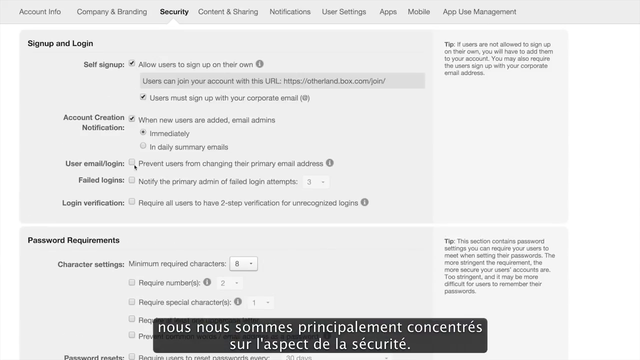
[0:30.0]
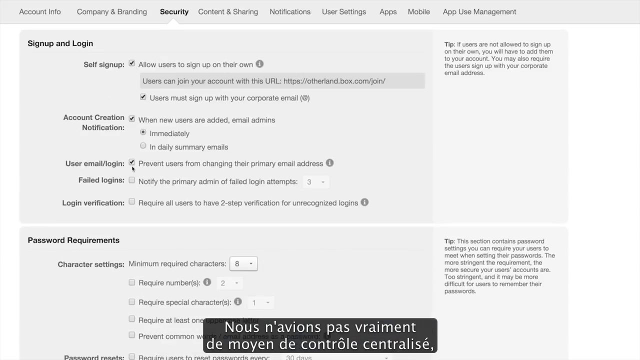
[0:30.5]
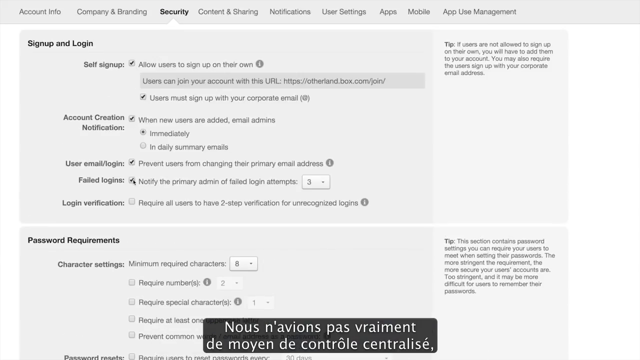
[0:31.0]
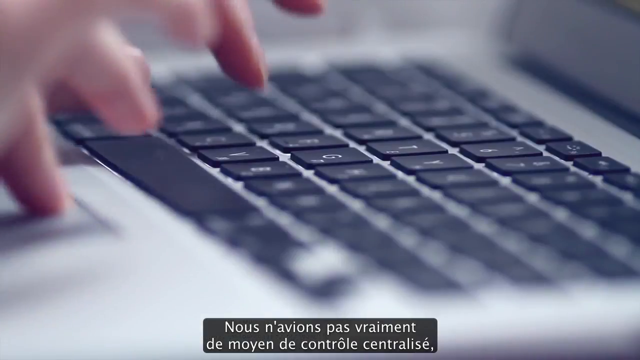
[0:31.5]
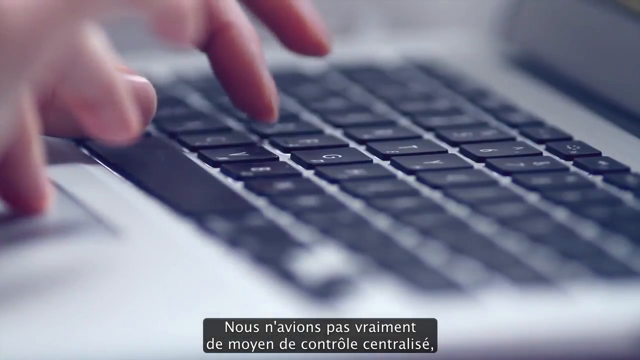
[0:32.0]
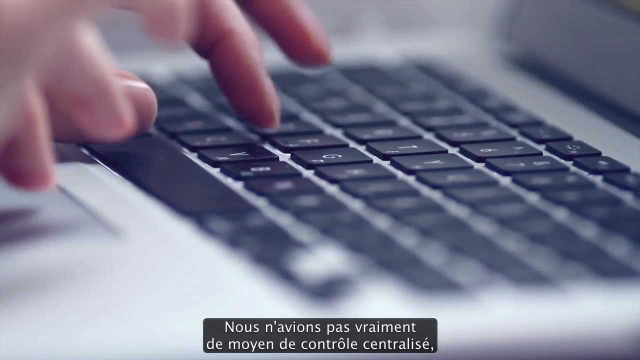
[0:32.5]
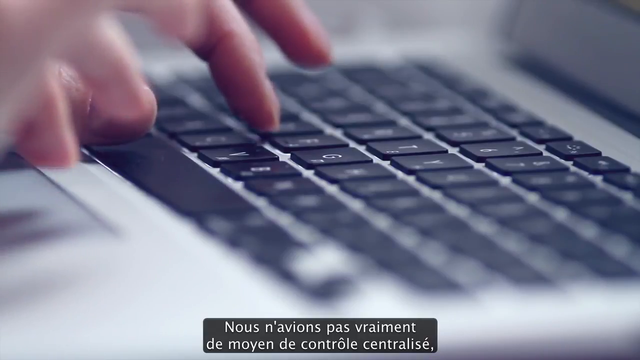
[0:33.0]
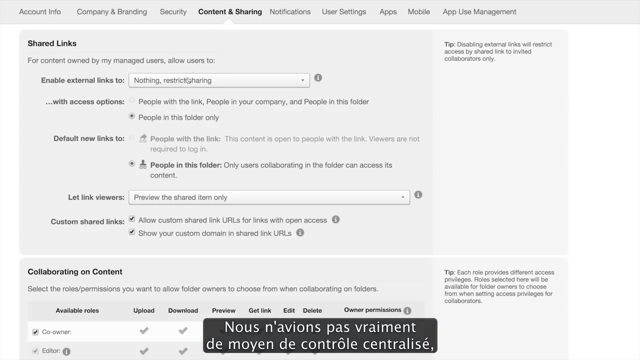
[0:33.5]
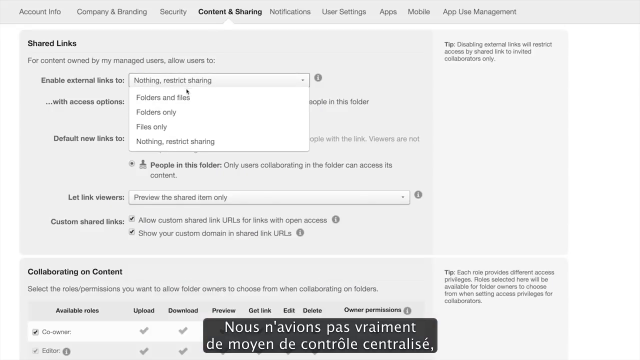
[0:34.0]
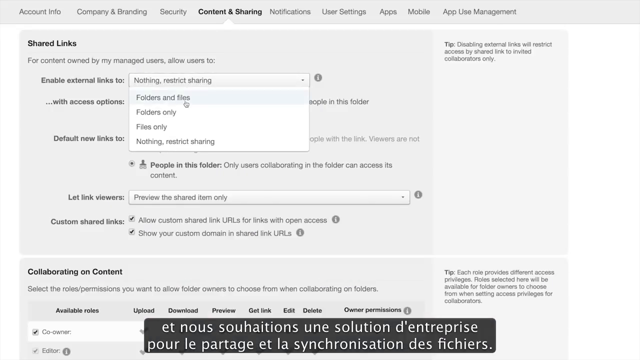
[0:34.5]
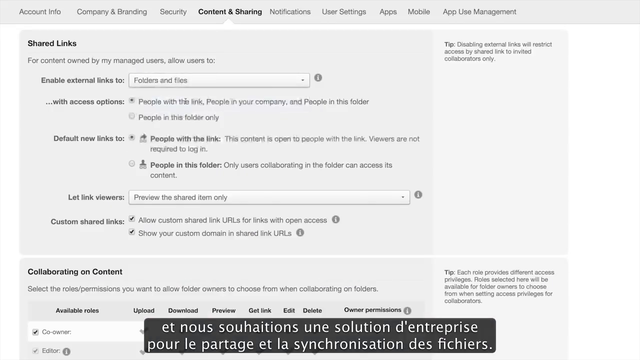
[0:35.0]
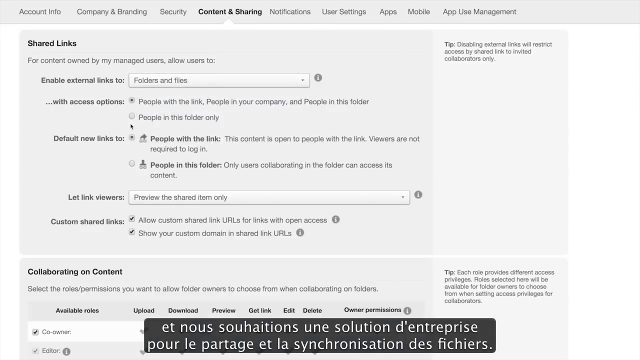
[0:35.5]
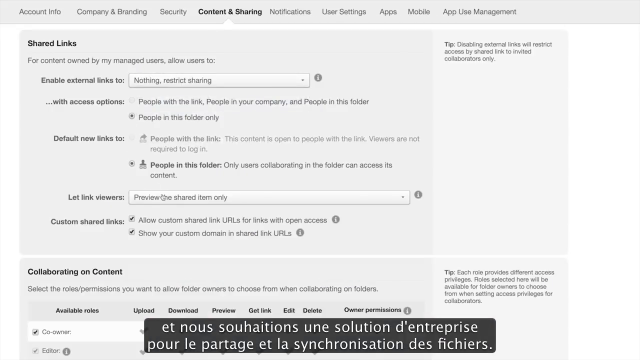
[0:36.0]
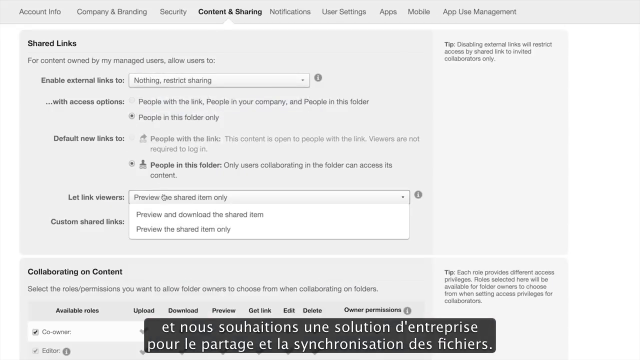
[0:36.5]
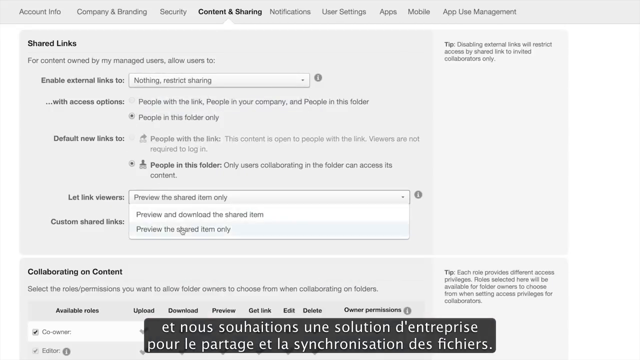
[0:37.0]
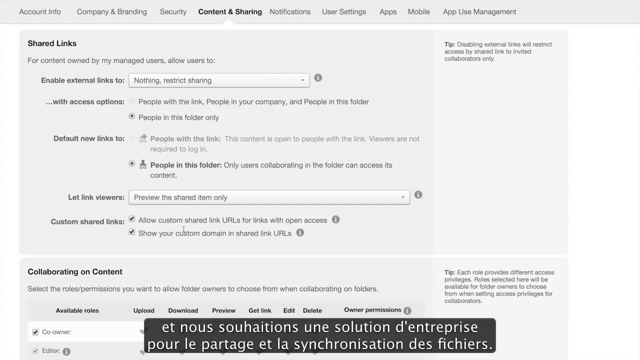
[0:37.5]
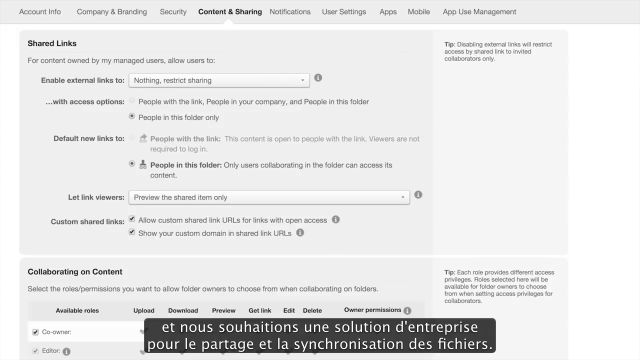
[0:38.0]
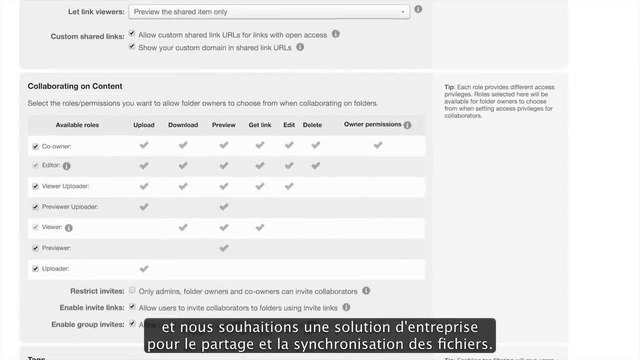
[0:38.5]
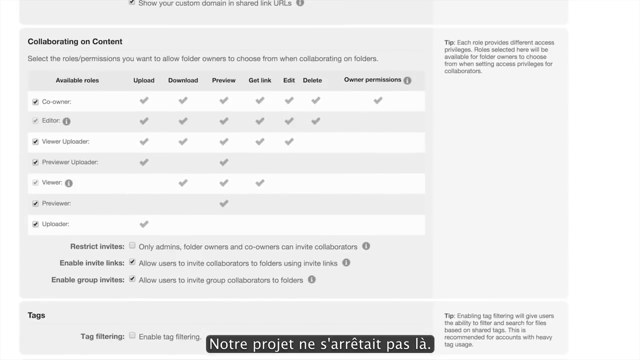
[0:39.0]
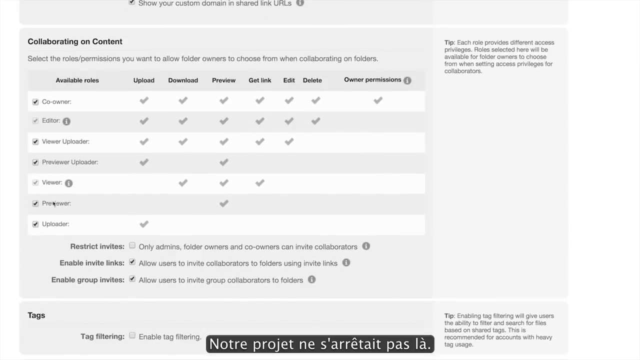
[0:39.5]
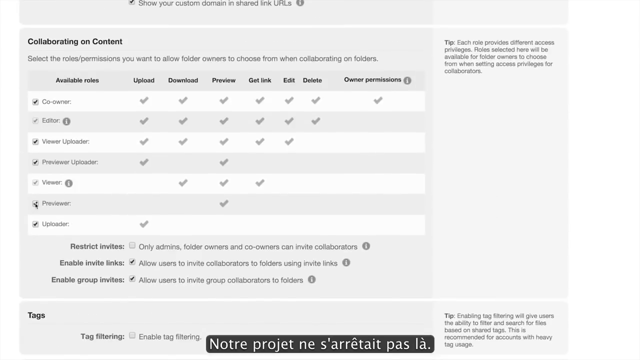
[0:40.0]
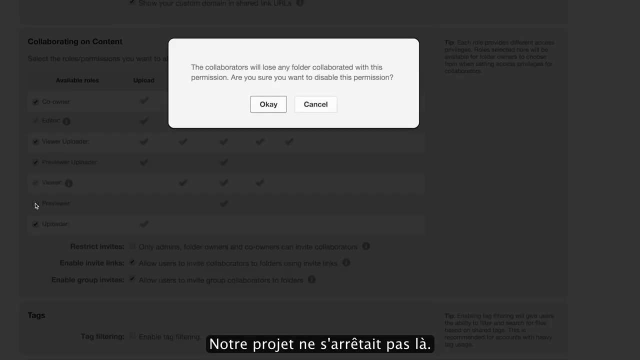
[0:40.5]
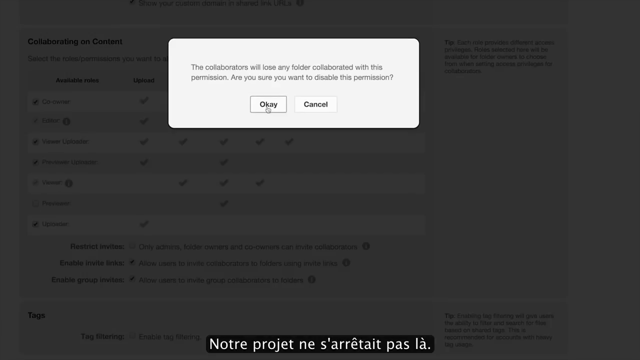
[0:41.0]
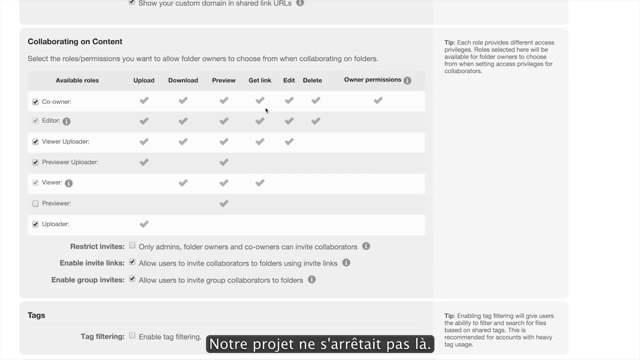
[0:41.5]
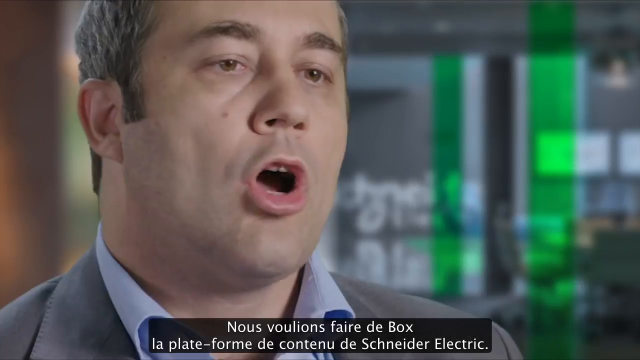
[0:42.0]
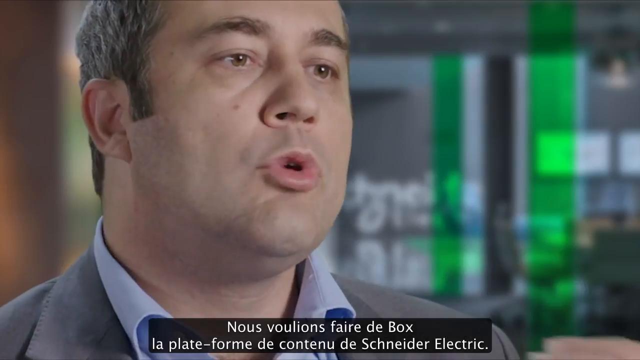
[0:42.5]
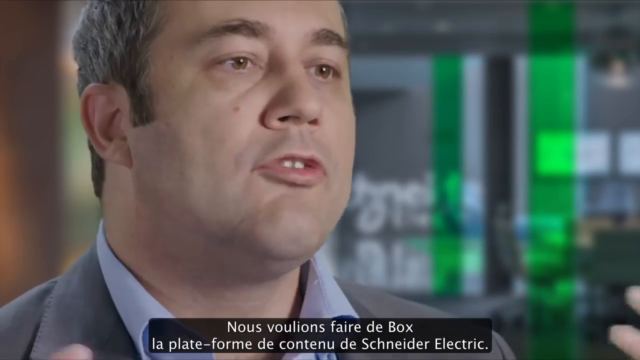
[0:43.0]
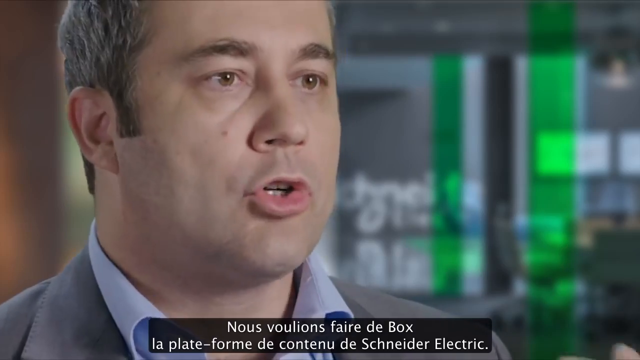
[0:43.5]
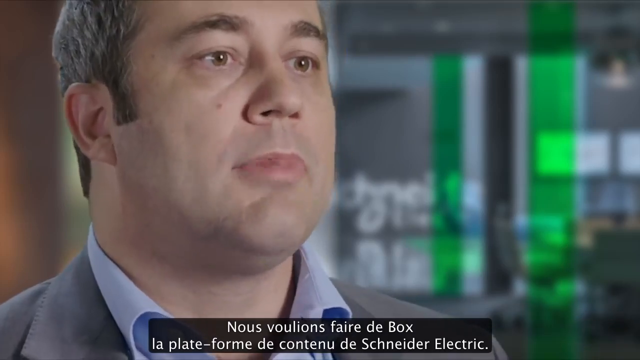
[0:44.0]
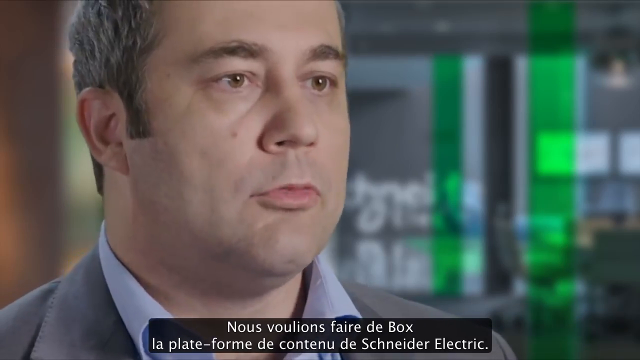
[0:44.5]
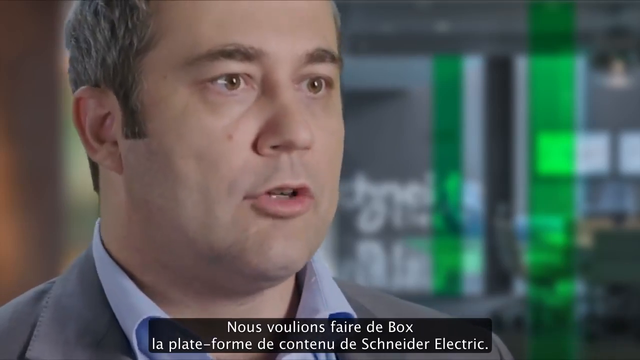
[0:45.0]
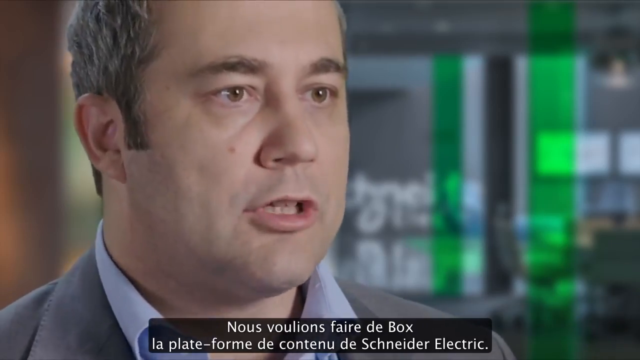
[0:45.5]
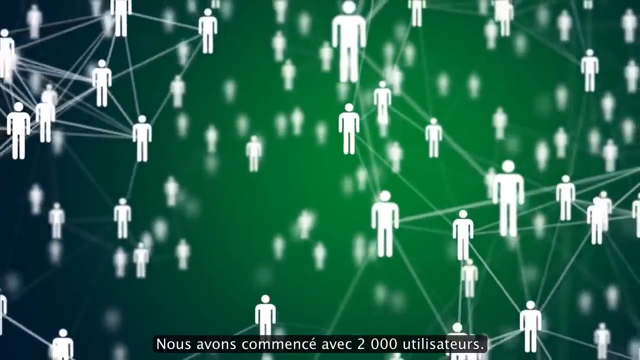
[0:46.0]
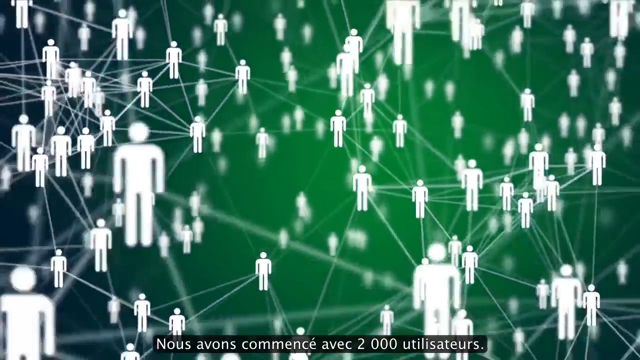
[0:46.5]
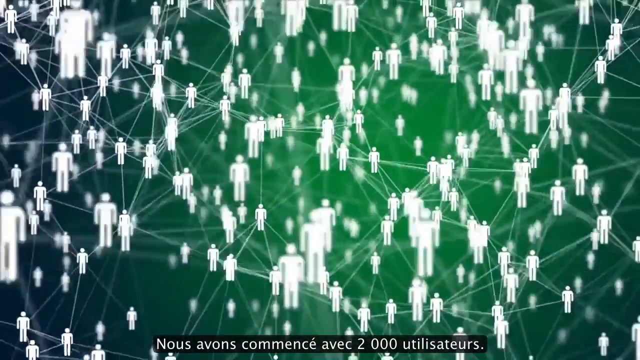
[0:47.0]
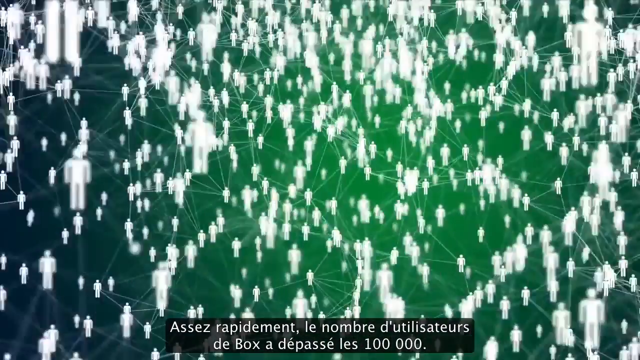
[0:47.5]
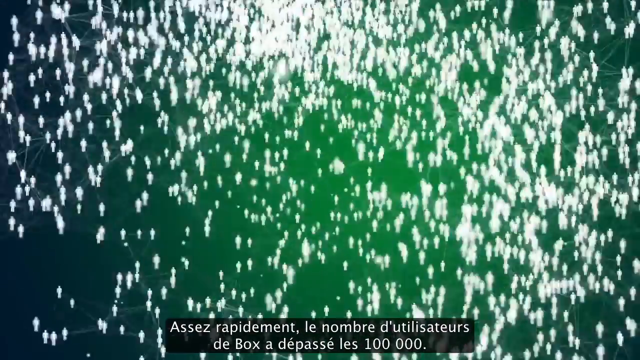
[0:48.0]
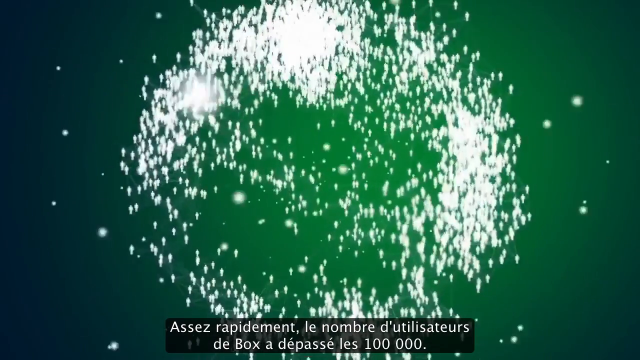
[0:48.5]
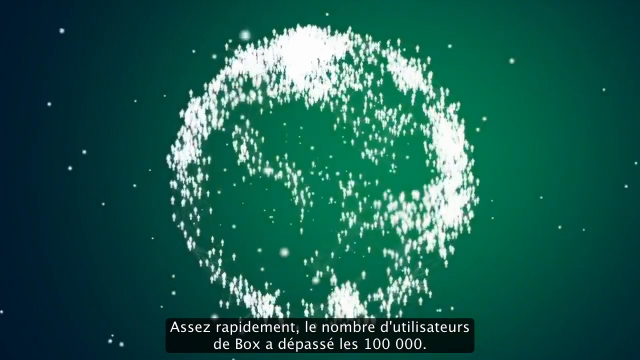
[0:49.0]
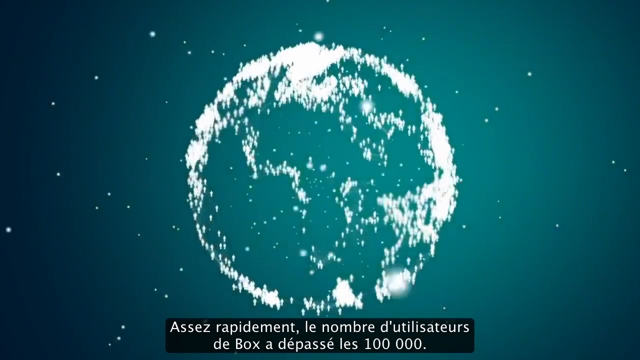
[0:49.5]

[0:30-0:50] People are still busy working on their laptops, and the pages they are working on are shown on screen, including shared links, account info, printing a security code, and sharing notifications. A script is shown that demonstrates how it is done. The man keeps talking and explaining as if he is concerned about something, looking around while he speaks. Images of human beings then appear on the screen and form into a world sign, apparently relating to energy used by people globally.